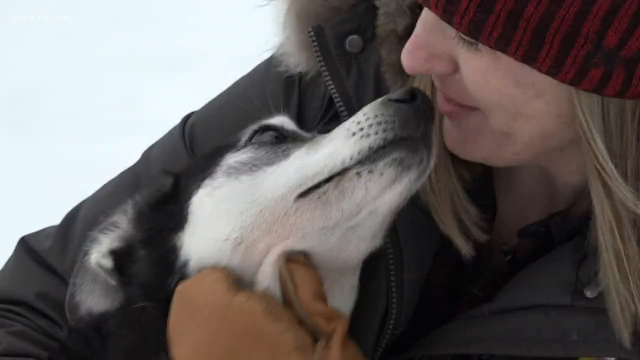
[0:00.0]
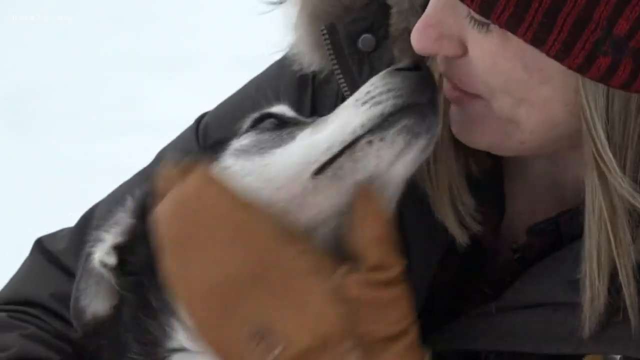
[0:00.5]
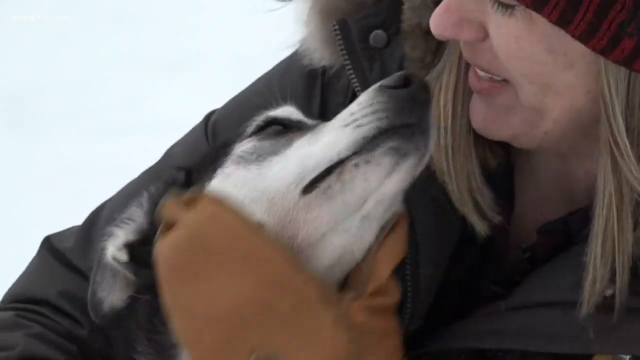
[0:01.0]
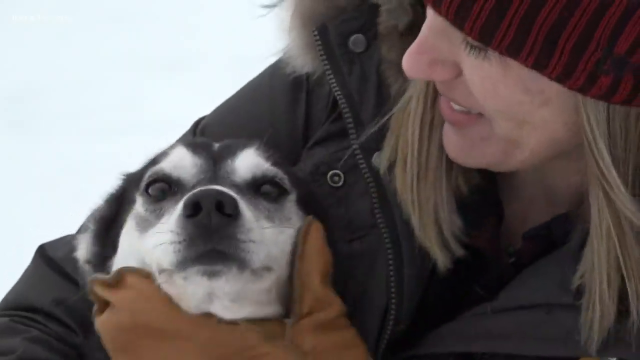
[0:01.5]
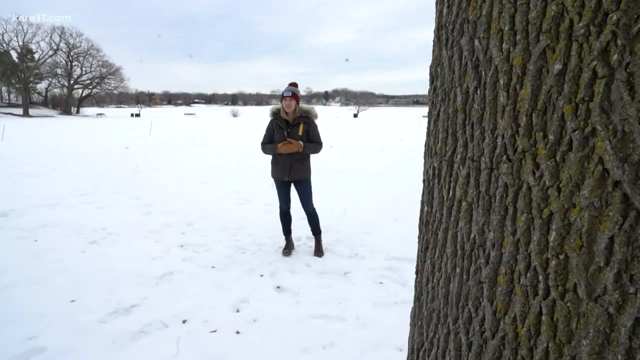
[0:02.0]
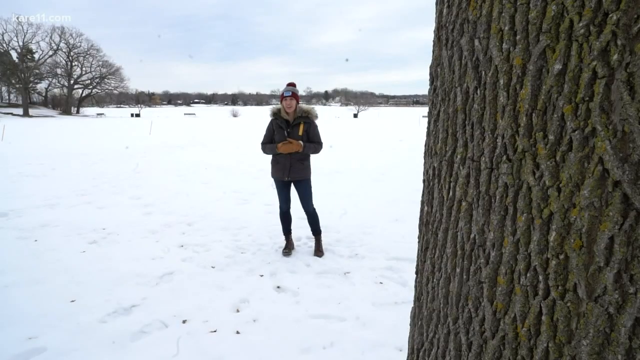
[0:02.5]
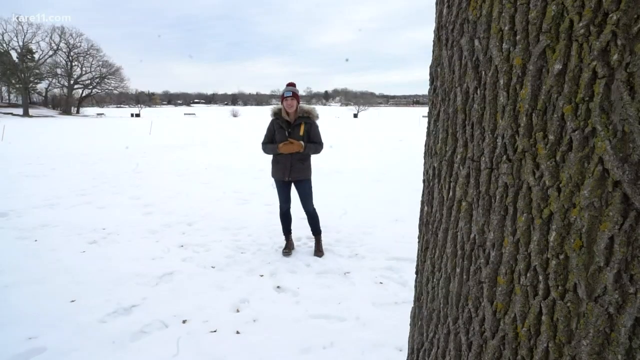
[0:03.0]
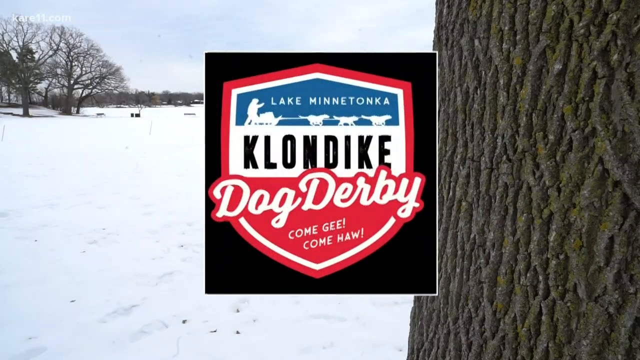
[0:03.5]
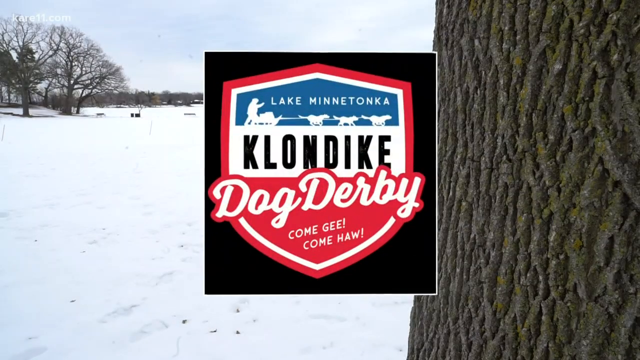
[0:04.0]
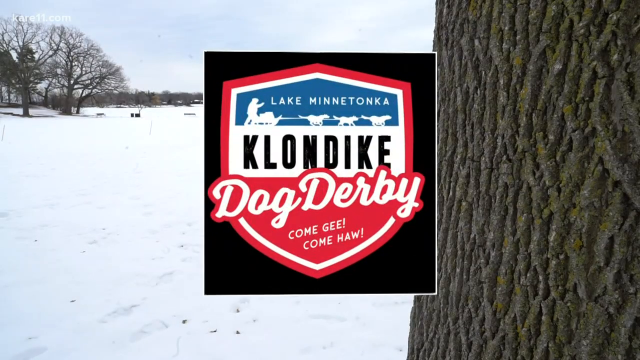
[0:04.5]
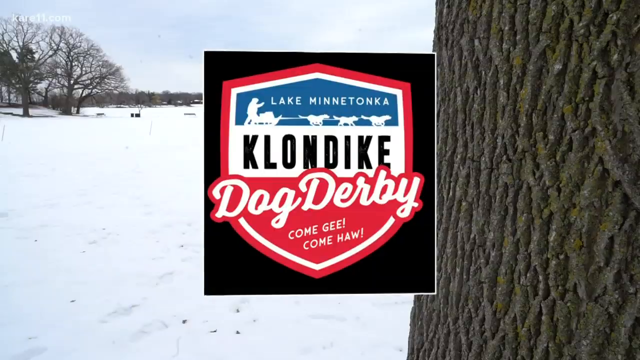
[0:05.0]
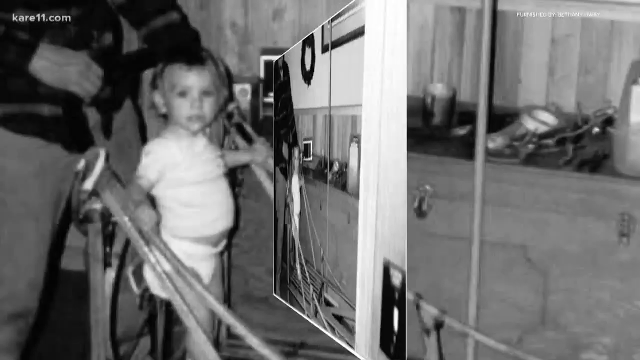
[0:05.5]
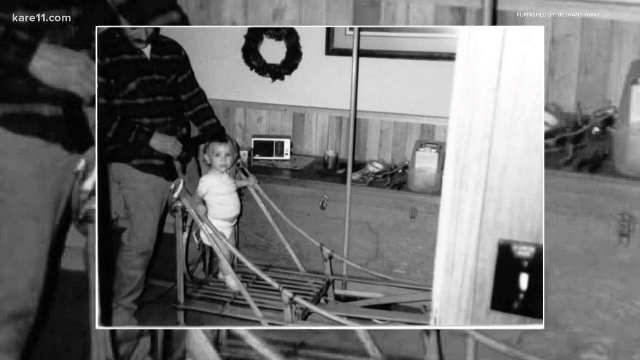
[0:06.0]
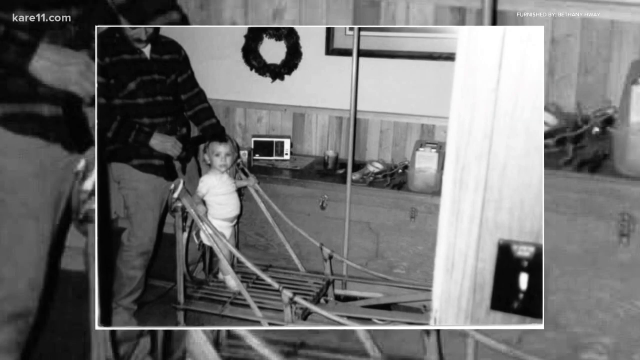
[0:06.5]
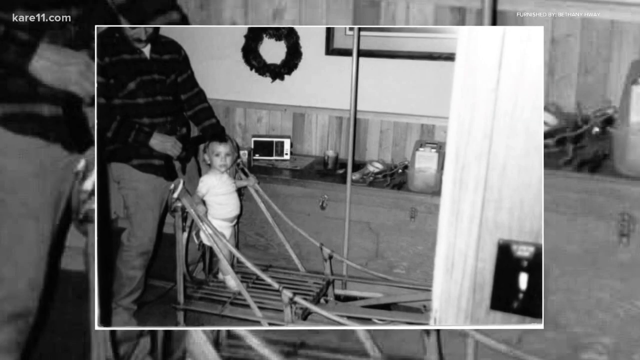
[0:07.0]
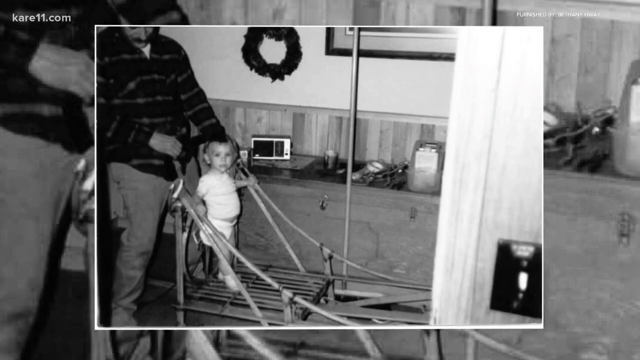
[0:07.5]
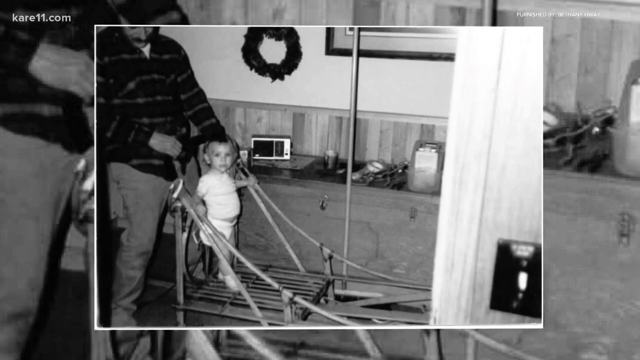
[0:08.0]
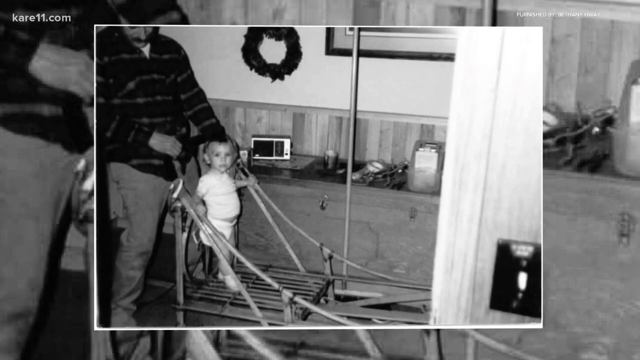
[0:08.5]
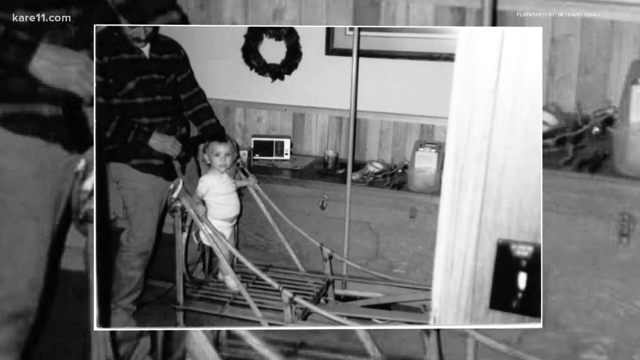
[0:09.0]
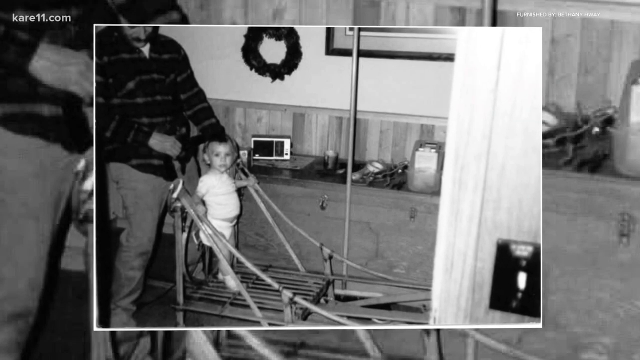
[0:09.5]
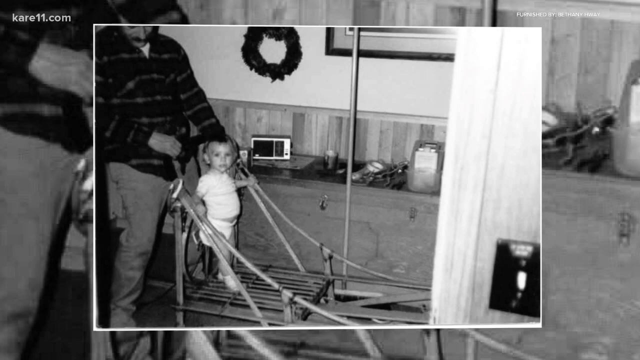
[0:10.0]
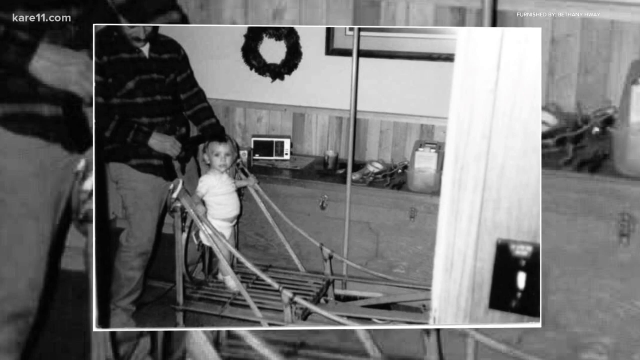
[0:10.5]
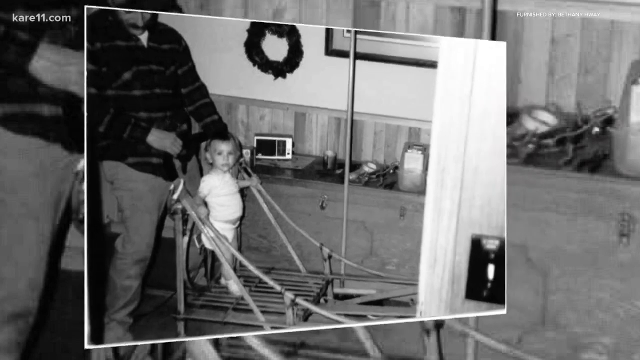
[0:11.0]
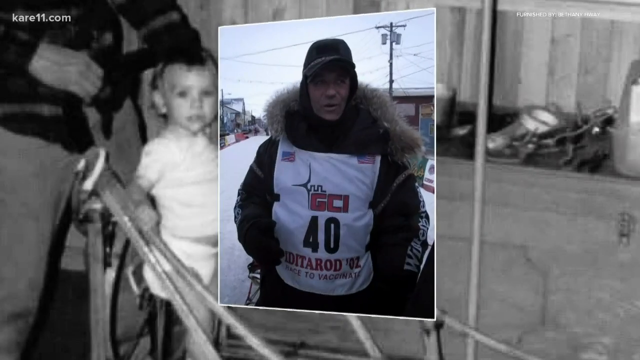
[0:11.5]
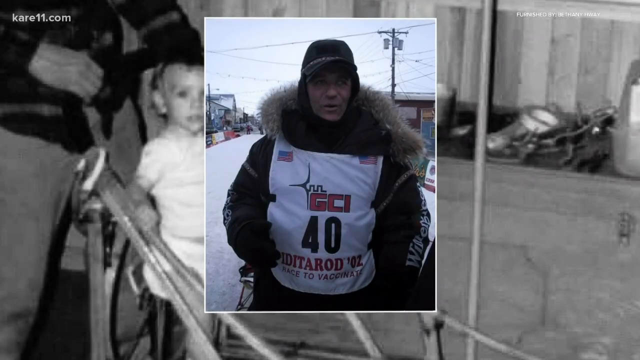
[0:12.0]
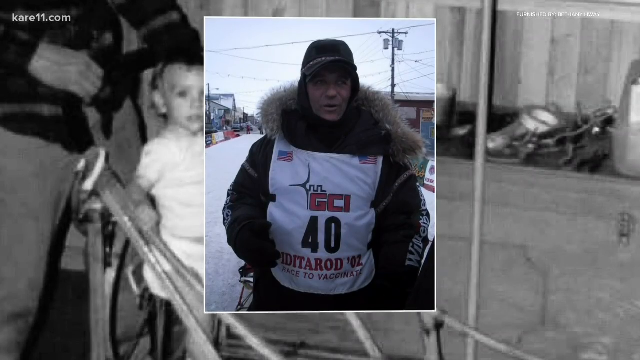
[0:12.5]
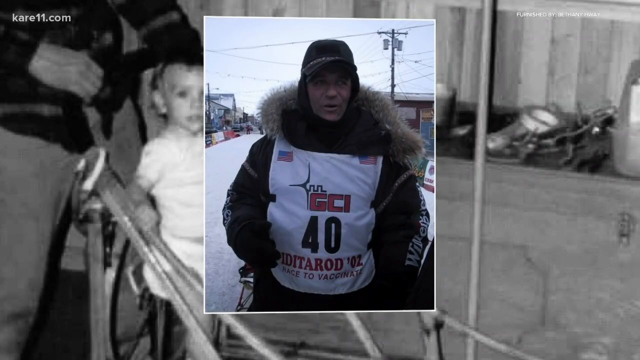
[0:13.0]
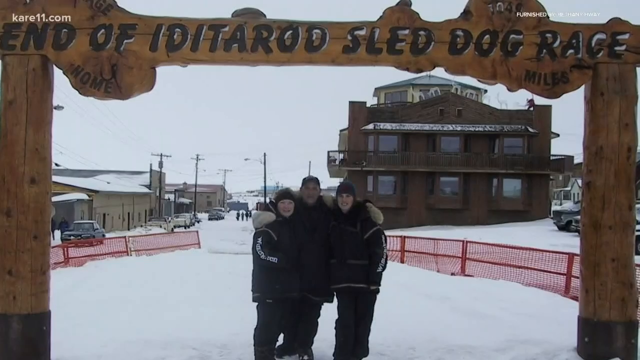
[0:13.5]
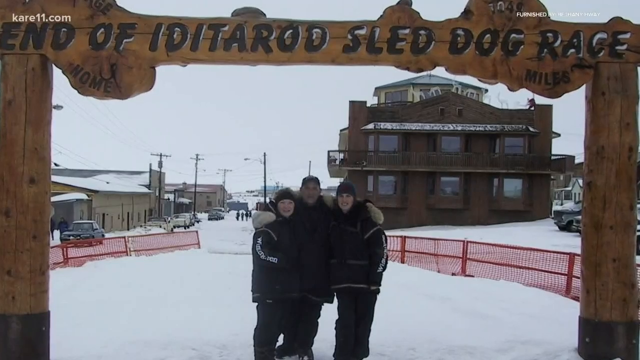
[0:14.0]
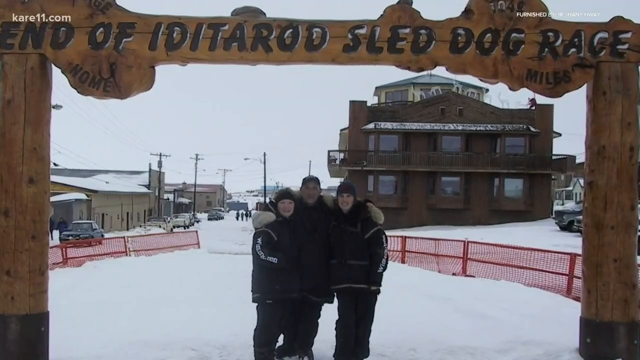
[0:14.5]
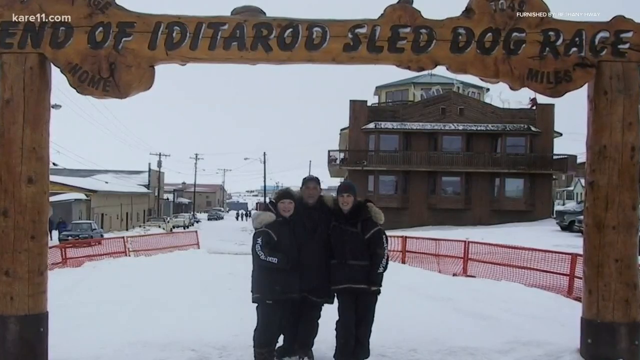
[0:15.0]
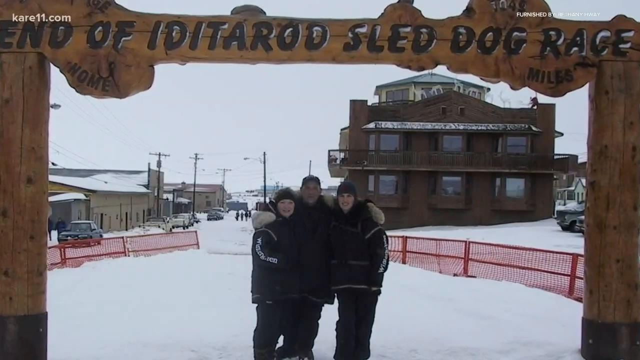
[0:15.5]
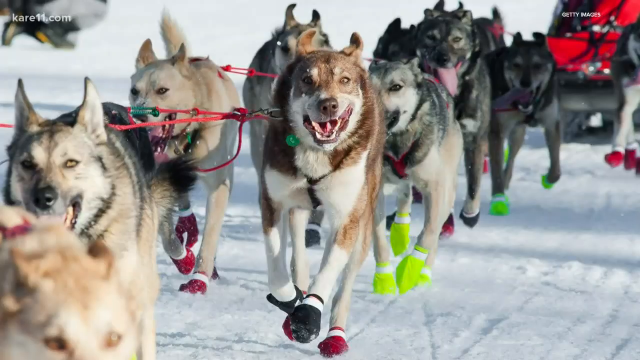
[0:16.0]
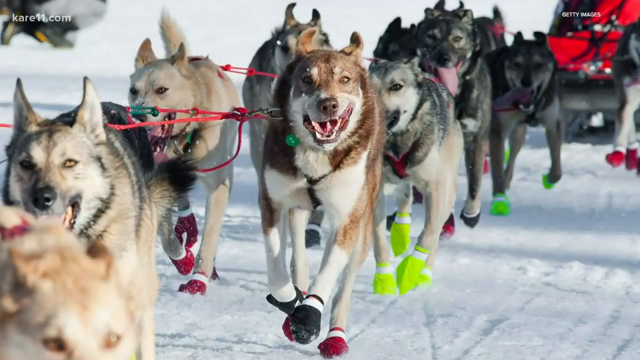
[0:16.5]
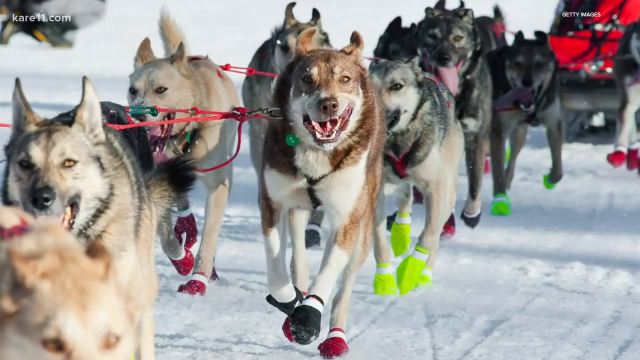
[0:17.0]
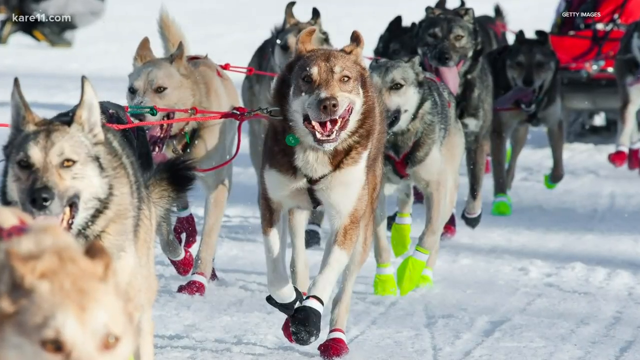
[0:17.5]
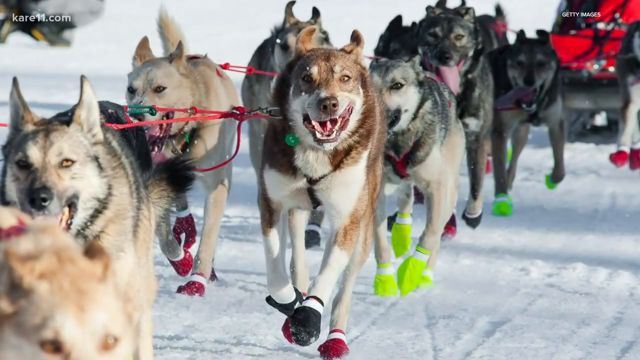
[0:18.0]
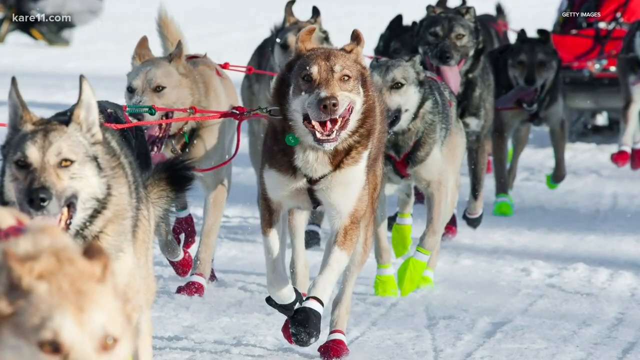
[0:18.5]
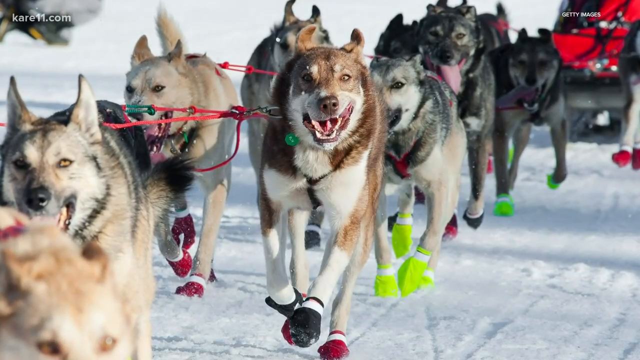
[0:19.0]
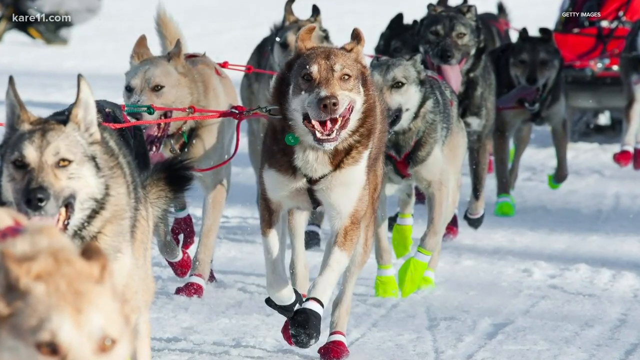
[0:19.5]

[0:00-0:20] A woman in her late 30s with blonde hair and dark eyes wears a toboggan with a patch on the front that cannot quite be made out; the rim of the toboggan is vertically striped in maroon and lighter red, and the top is gray. She has on a large coat with fur at the top of the collar. She is affectionately loving on a black and white husky, which is looking right at her. Then an emblem appears in the center of the screen reading "Lake Minnetonka Klondike Dog Derby, Come Gee, Come Hall"; it is a red patch with white and black writing.